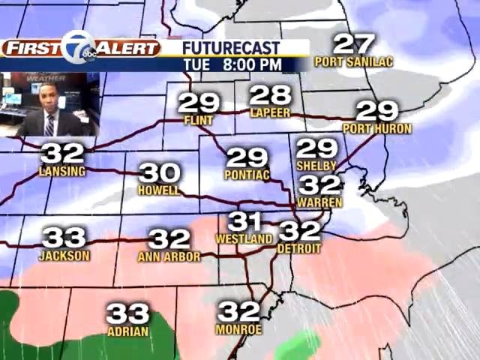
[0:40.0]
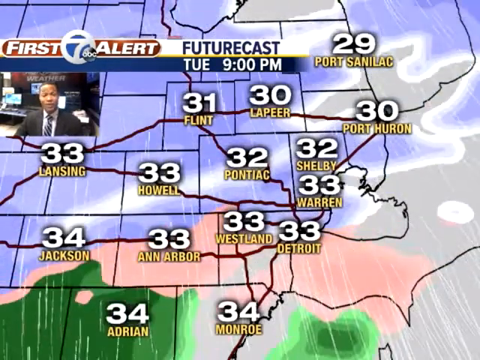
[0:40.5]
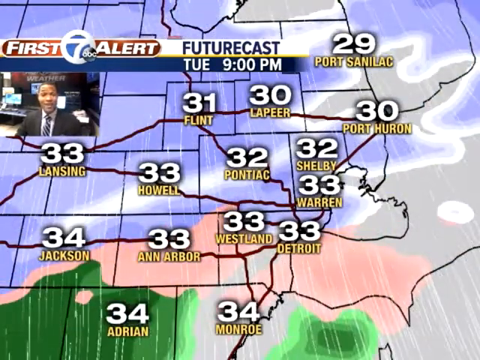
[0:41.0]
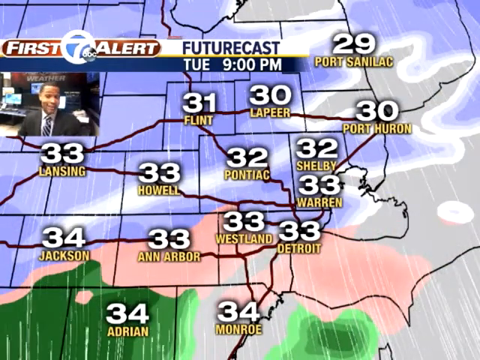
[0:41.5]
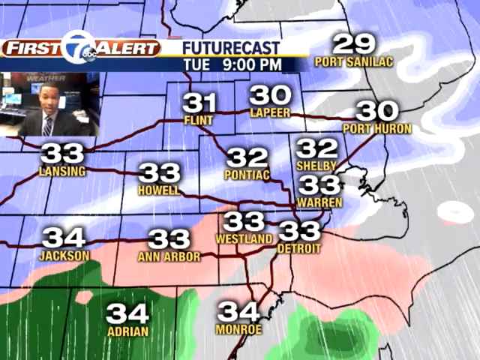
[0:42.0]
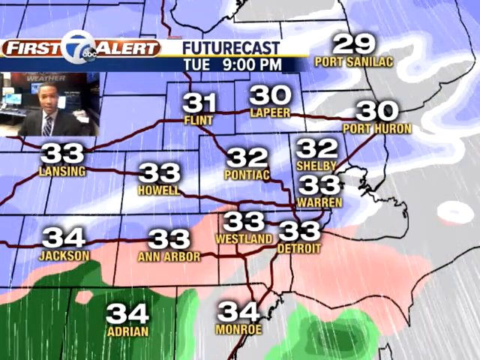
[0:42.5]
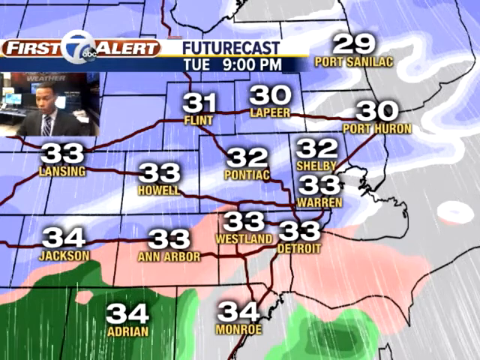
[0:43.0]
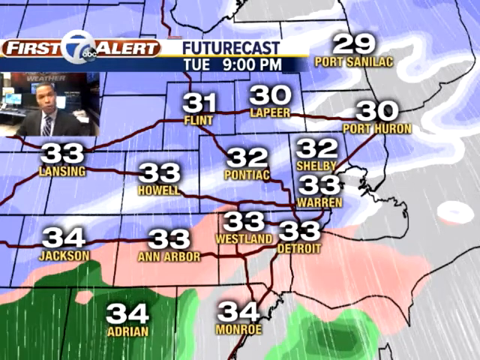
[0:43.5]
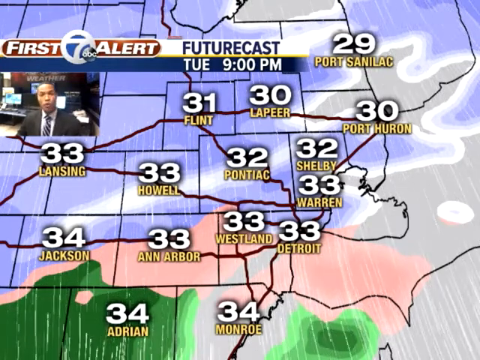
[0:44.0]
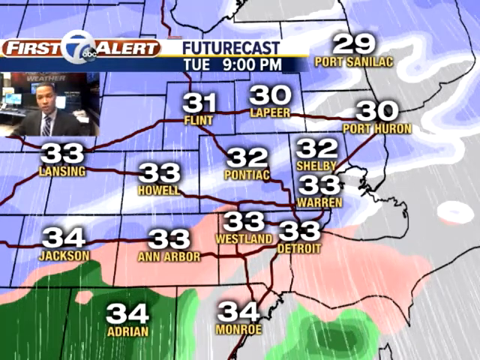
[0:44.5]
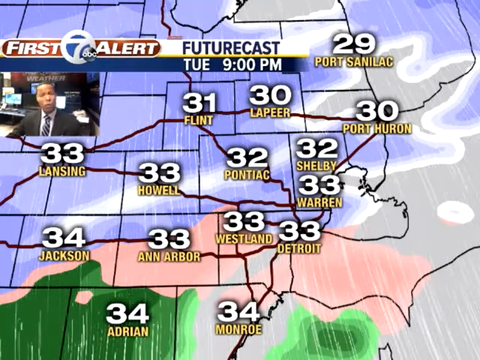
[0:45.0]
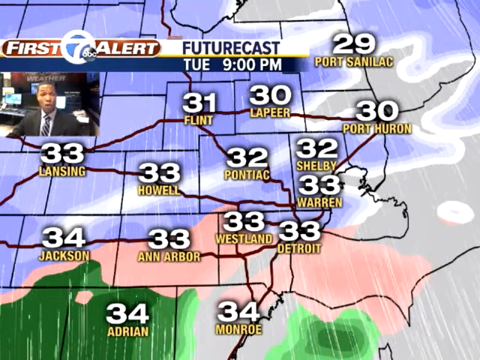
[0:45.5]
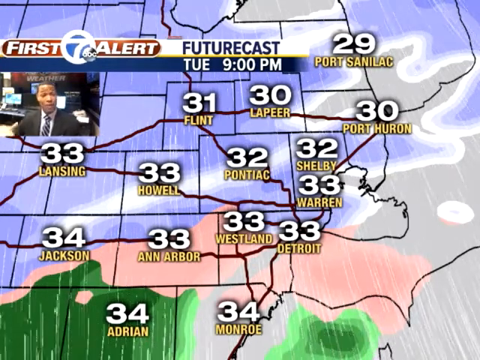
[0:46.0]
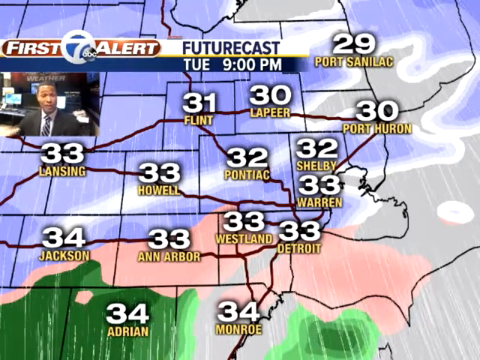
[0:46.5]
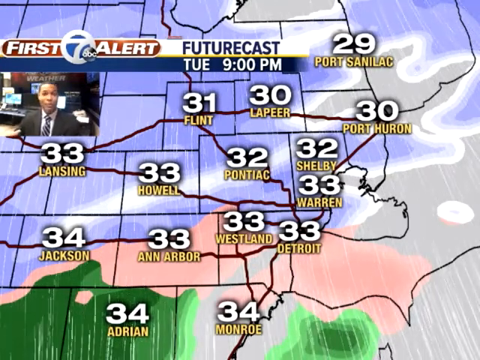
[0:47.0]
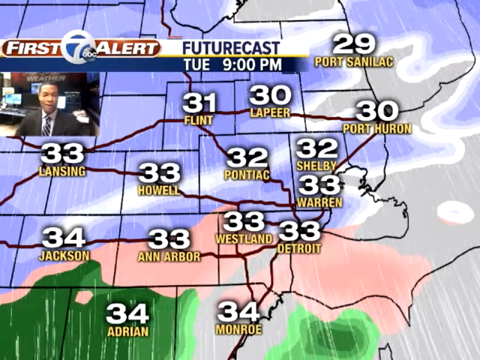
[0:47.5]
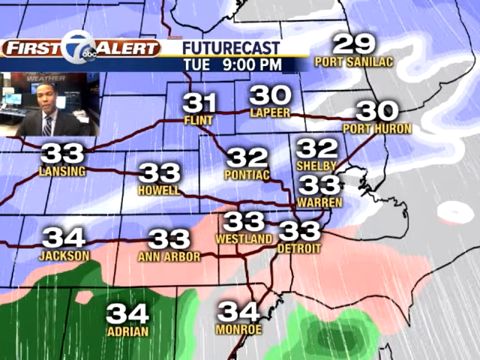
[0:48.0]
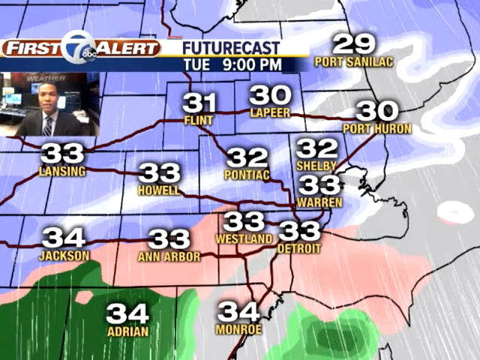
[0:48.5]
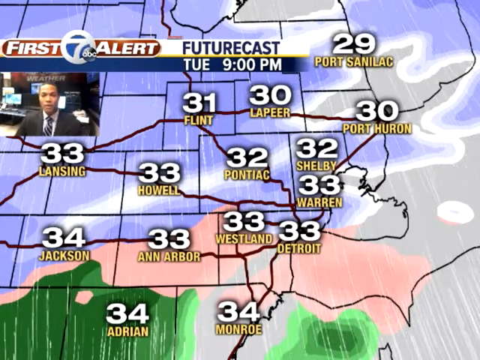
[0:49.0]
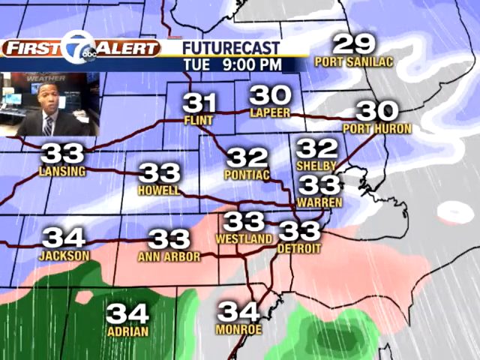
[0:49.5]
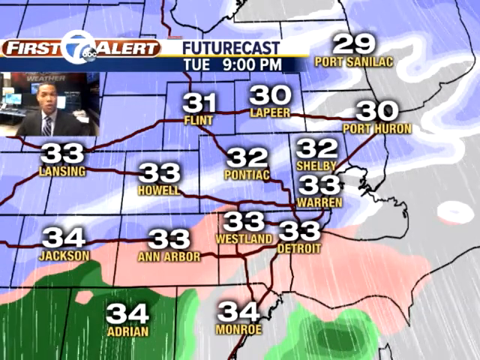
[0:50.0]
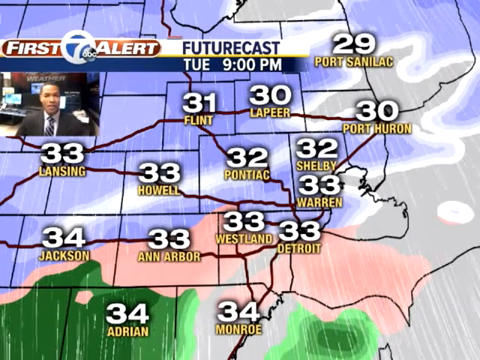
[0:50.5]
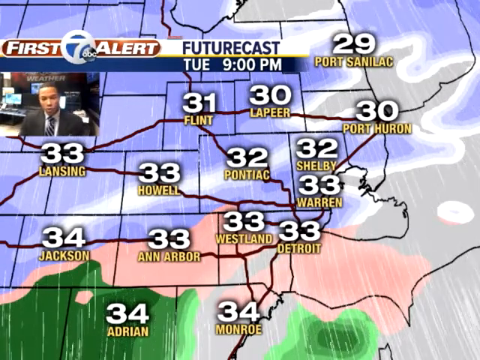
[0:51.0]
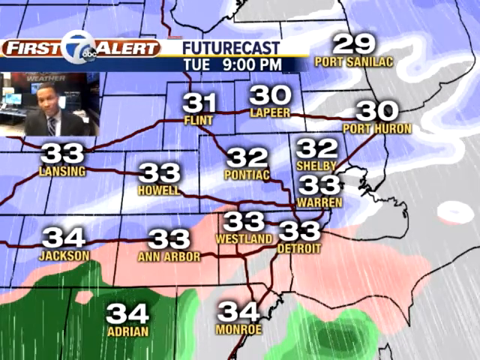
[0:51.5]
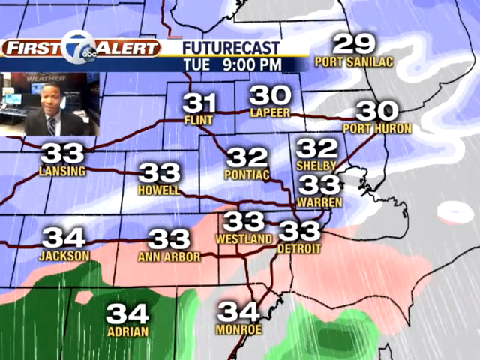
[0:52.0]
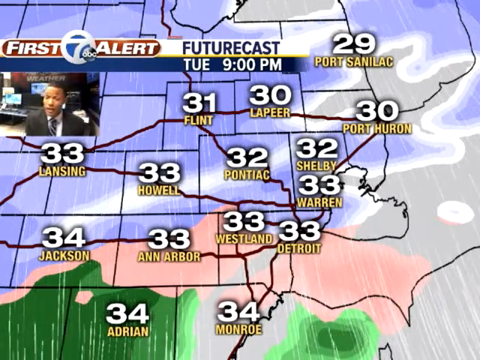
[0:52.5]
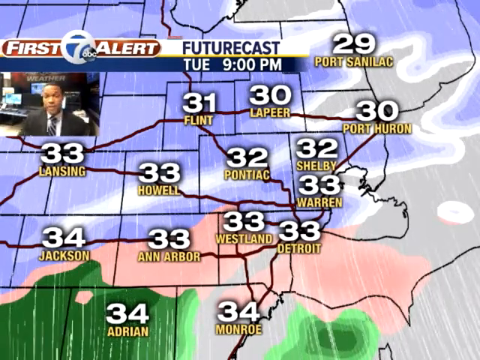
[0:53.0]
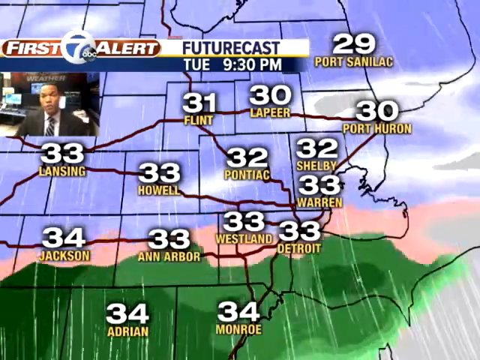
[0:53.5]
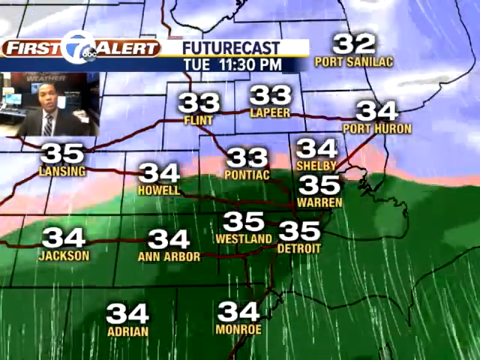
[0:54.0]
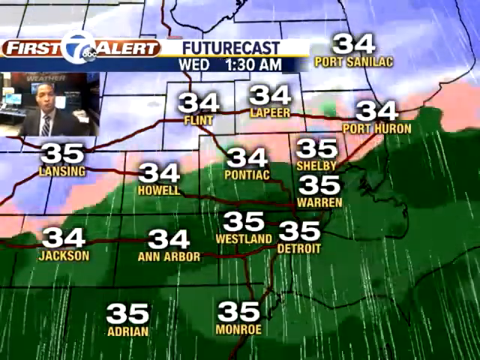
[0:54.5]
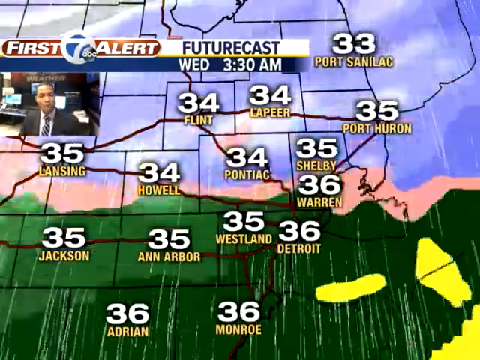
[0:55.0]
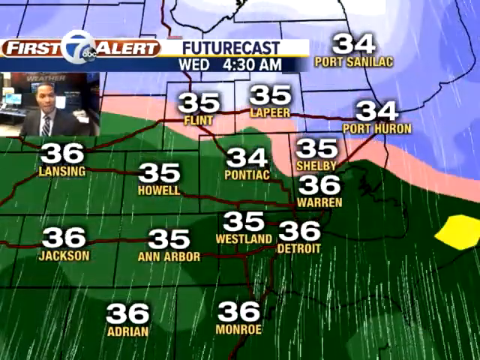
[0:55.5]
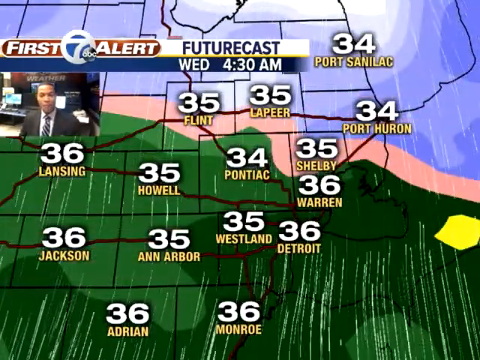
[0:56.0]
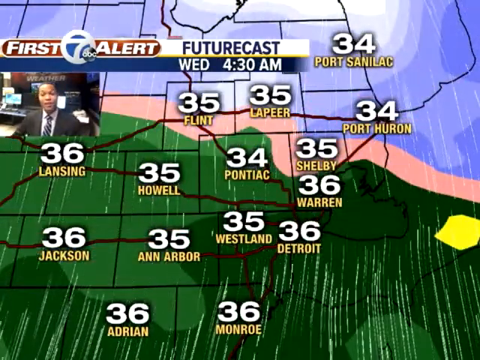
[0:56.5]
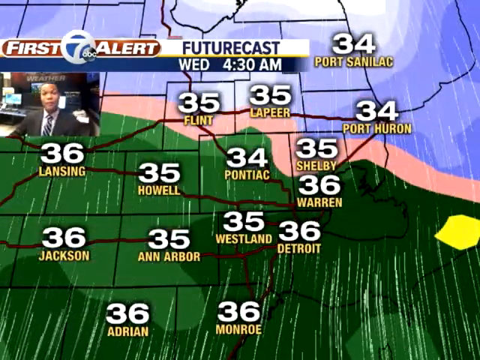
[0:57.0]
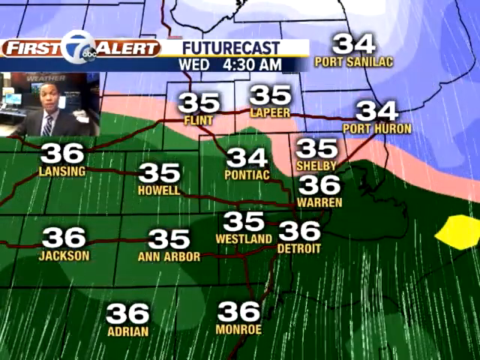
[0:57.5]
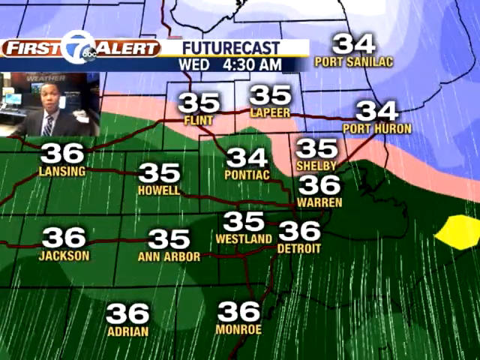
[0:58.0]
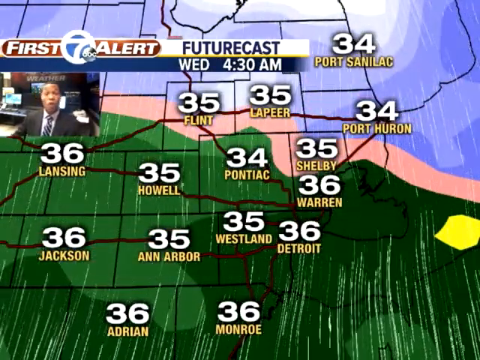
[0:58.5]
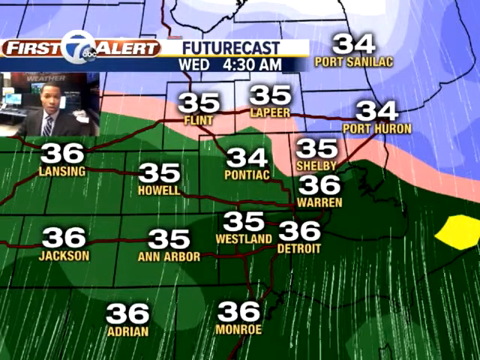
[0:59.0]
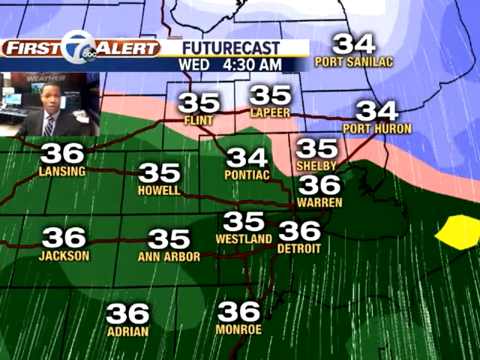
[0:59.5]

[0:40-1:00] A map of the area around Detroit shows weather predictions for Monday at 9 PM. The graphics use different colors to show changes in the predictions: the top part is a blue shade, transitioning to a pinkish color, then green and pink. Temperature marks show the current temperatures. The graphics then change considerably for Wednesday, with green now covering about half of the region. The presenter is also visible: a young Black man, formally dressed and clean, who seems quite knowledgeable based on his body language and facial expressions. Behind him are a number of laptops that are switched on.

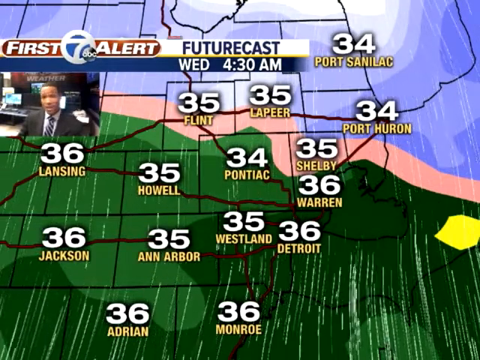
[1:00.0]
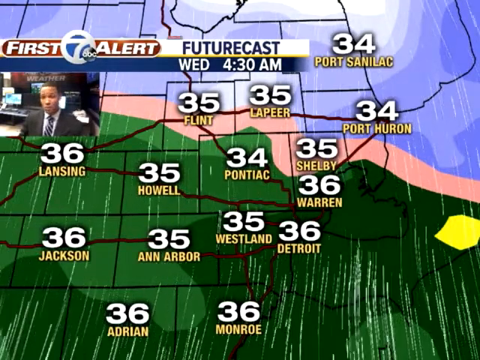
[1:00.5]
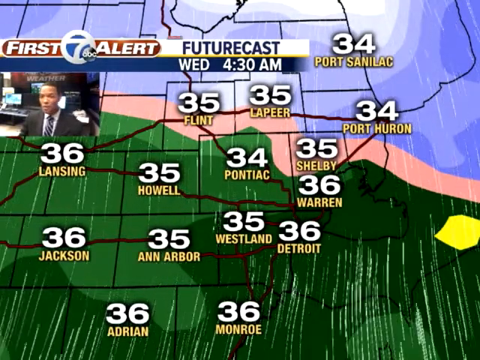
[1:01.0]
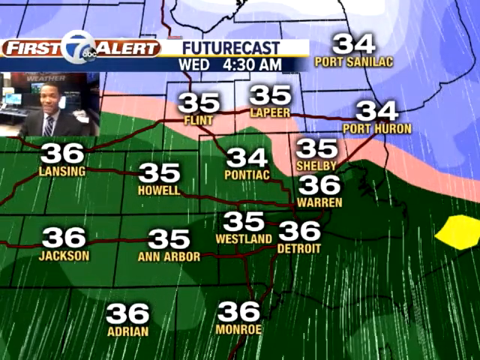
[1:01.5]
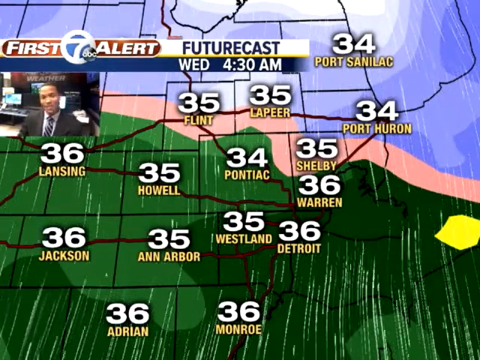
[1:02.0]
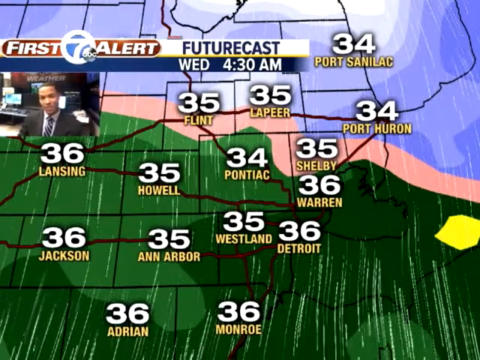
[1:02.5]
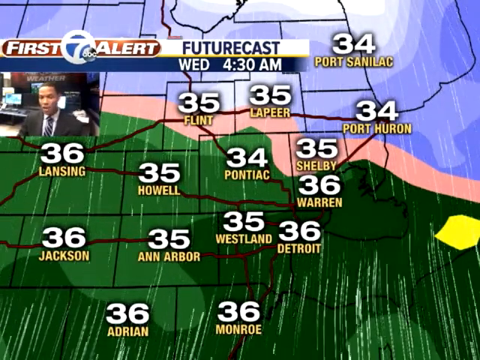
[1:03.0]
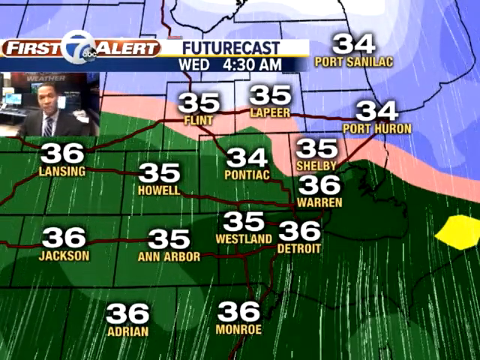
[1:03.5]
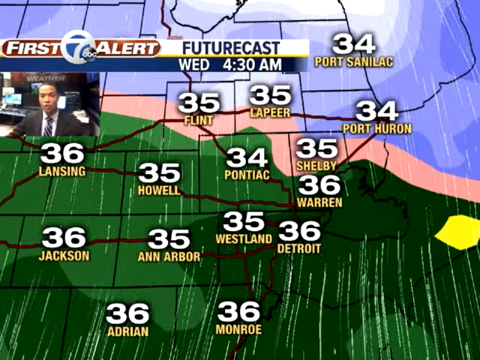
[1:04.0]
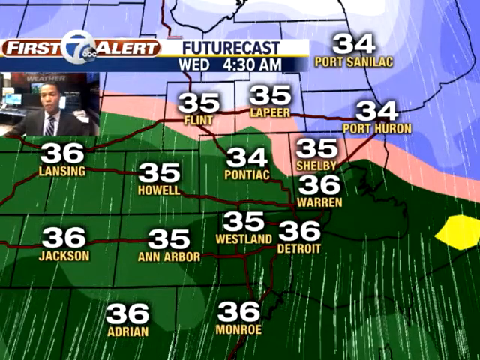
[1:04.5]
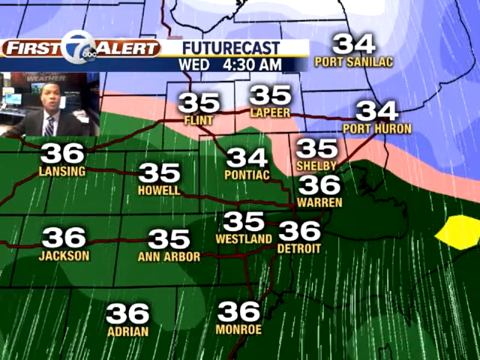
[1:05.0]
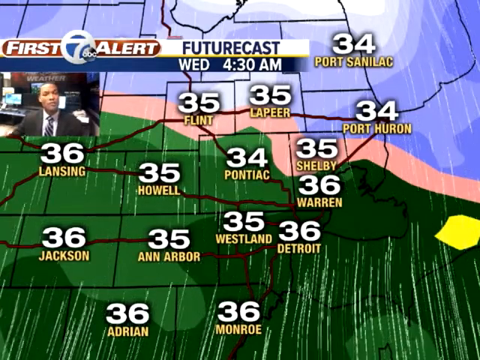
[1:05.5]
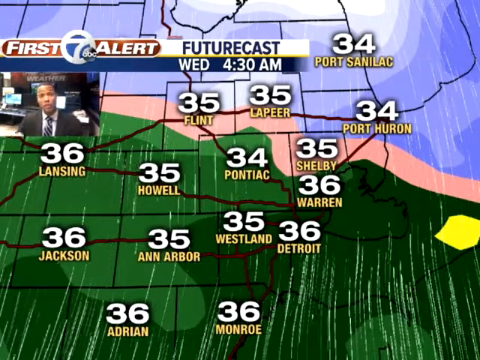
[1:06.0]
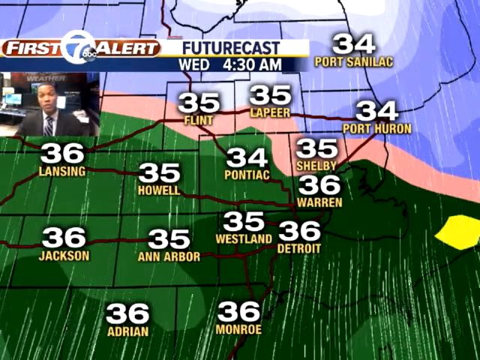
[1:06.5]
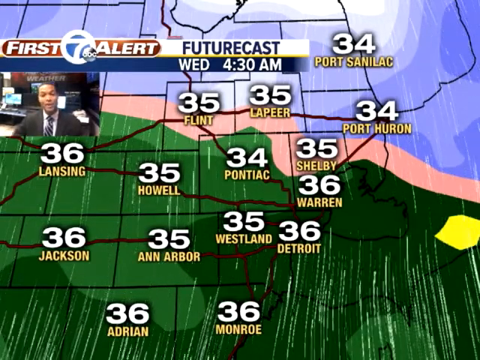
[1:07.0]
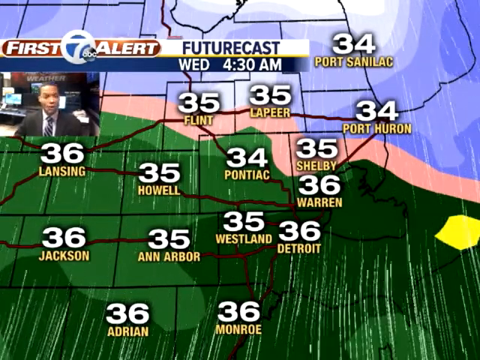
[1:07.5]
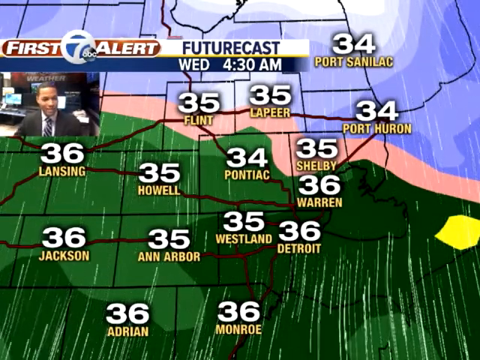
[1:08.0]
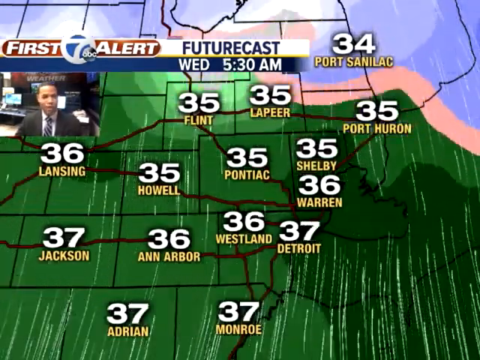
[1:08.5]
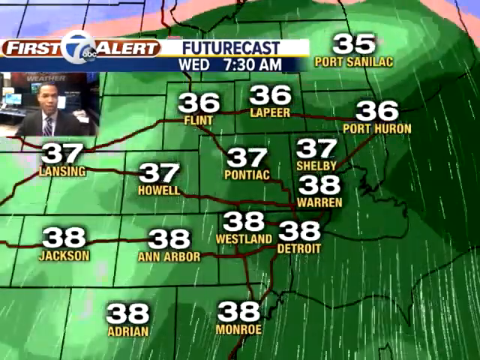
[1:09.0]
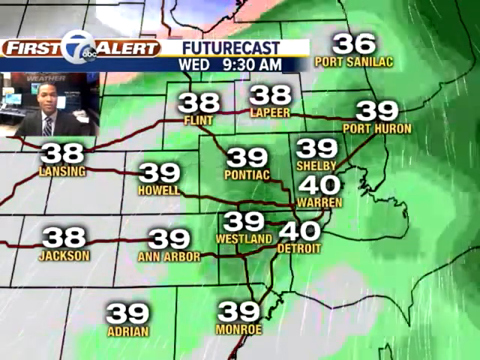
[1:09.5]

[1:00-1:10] A map shows key areas around Detroit, with subdivisions and different shades of color in different parts. The top quarter of the map is blue, followed by shades of pink, and then a green color that covers almost three quarters of the map. In the top right corner is the presenter, a young, clean-shaven Black man, formally dressed, who seems to be interpreting the results and seems confident. The graphic shows the wind blowing from south to north. The map then changes, and as of Wednesday 9 AM almost the whole map is covered with green, with temperatures ranging from 35 to 39 degrees Celsius.